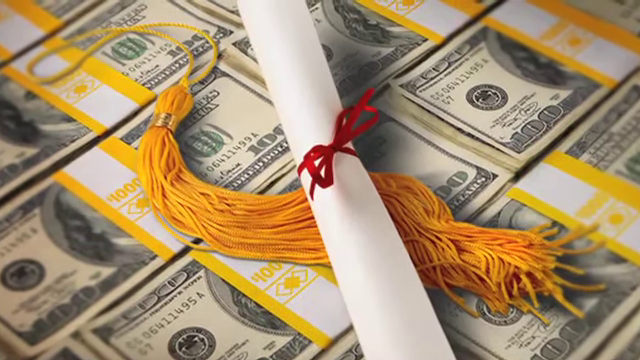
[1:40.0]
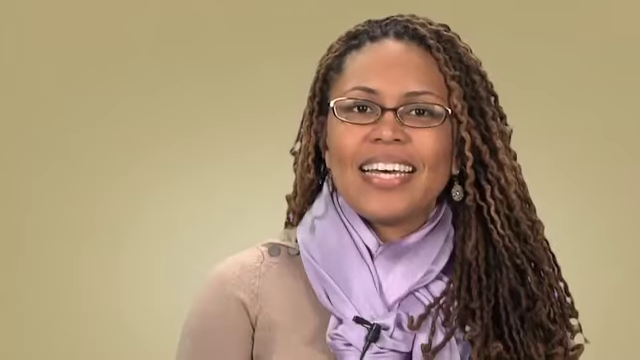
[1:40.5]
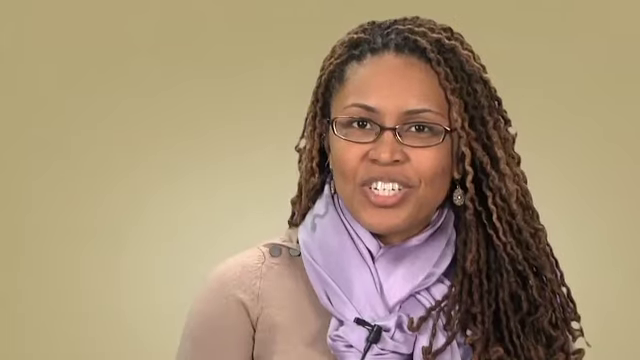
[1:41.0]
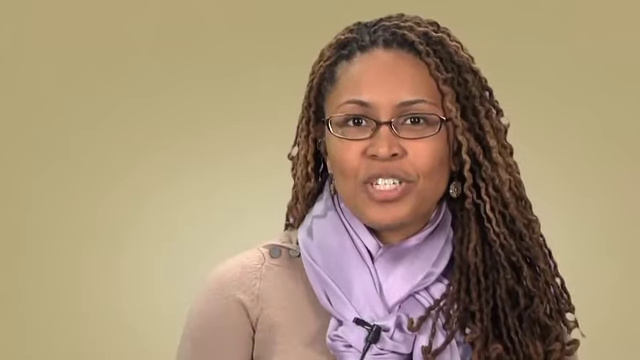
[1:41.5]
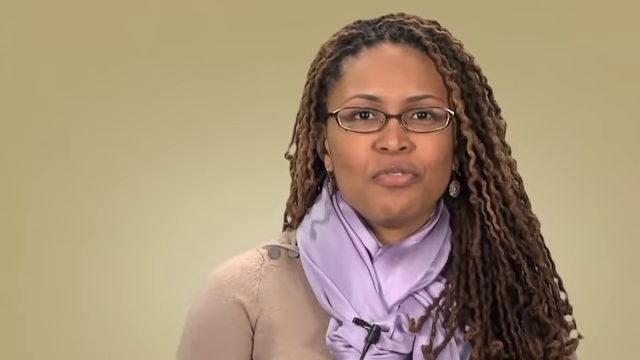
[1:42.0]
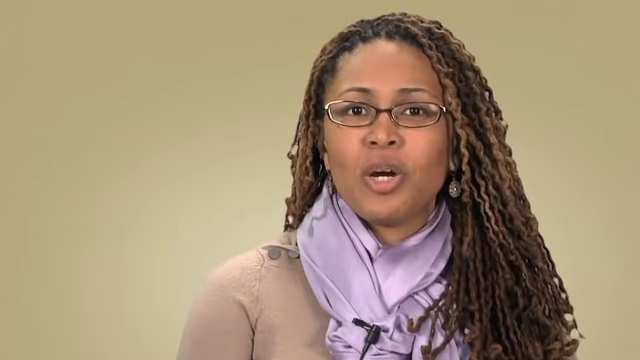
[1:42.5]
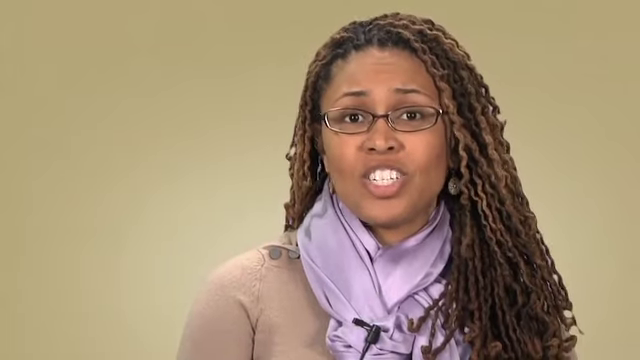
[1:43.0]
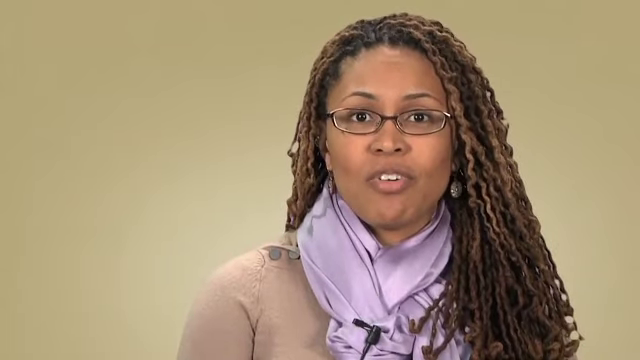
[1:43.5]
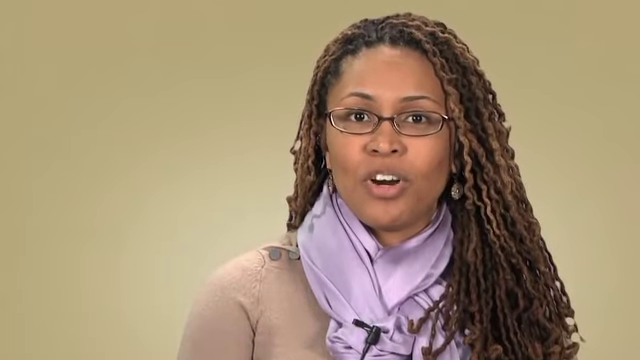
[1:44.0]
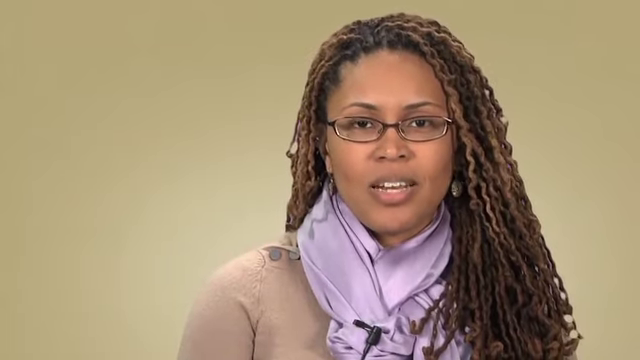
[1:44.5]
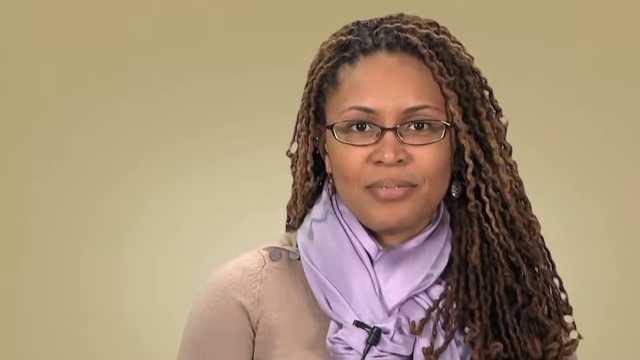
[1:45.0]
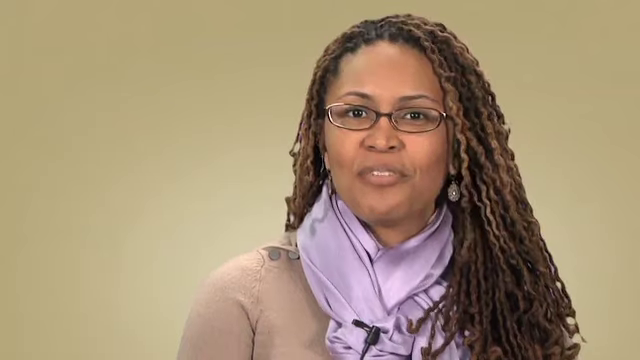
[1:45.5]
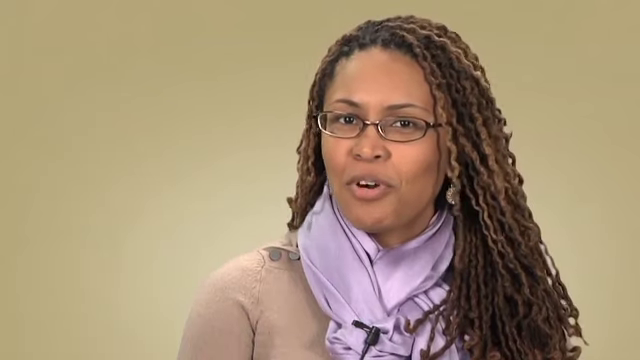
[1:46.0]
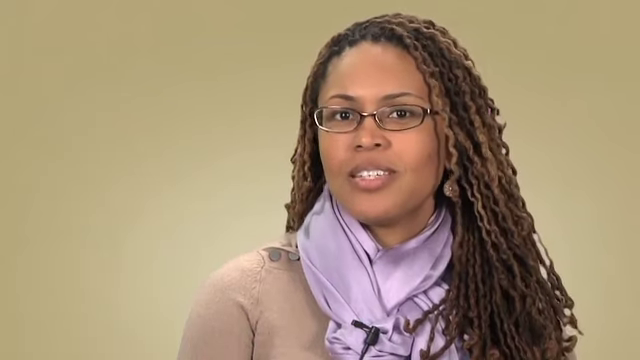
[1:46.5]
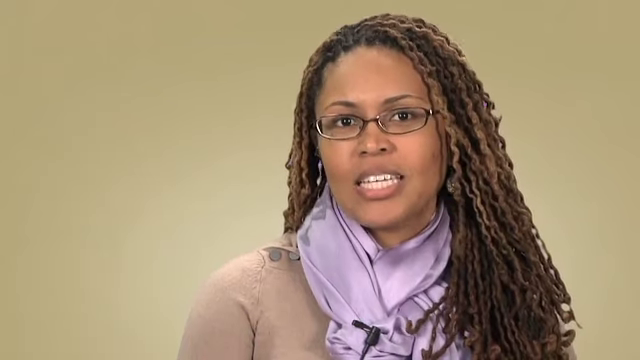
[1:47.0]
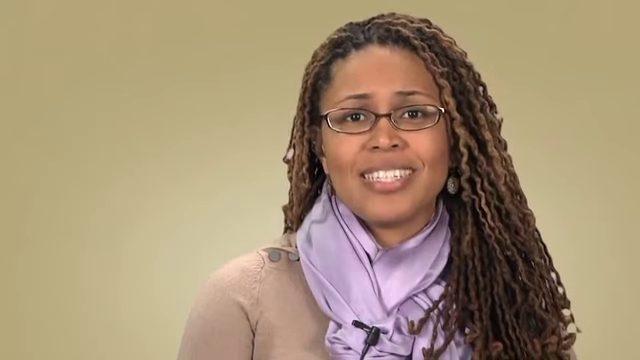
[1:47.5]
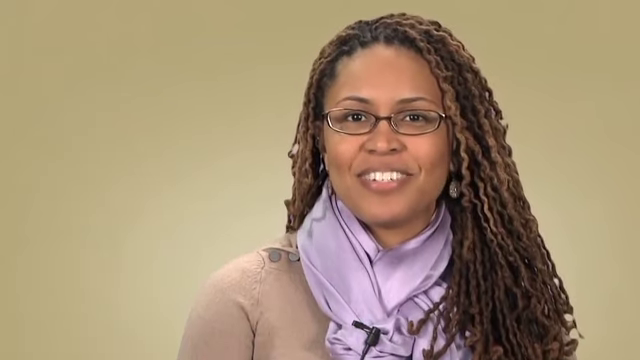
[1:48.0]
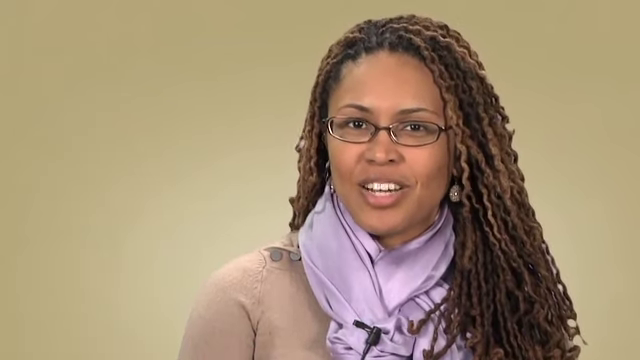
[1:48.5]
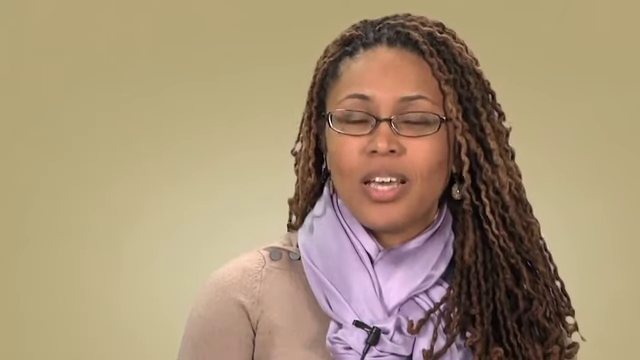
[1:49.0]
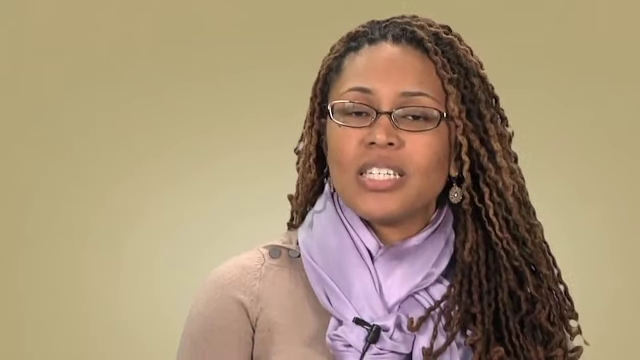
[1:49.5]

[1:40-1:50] A diploma with a red ribbon around it and a yellow tassel rests stacked on bundles of hundred-dollar bills. The video then shows the African-American woman, who wears glasses, a purplish scarf that looks like multiple scarves in one, a brown sweater and earrings, with her braids going down past her shoulders as she continues to talk. It goes back to the picture of the diploma stacked on hundred-dollar bills, then looks like it moves to a website; the bundles of hundred-dollar bills appear to be bundles of one thousand dollars, with a yellow and white tag around them showing the amount of one thousand dollars. The video then returns to the woman who has been speaking.